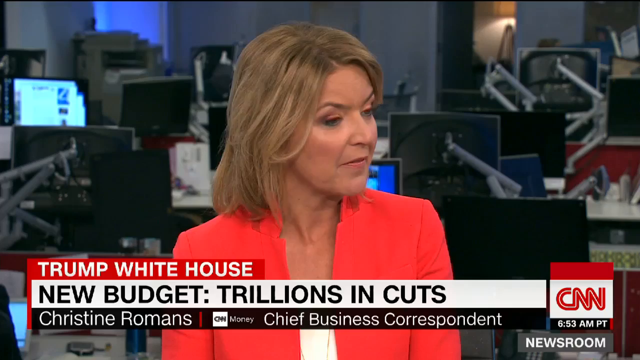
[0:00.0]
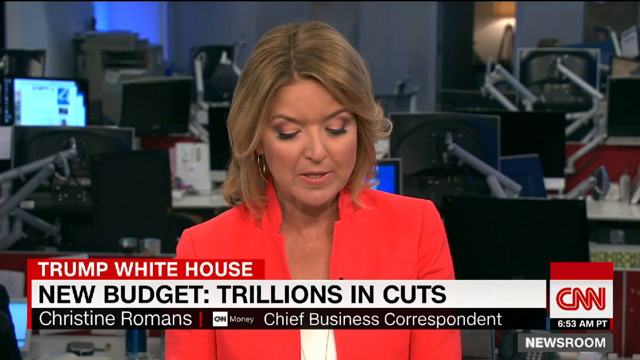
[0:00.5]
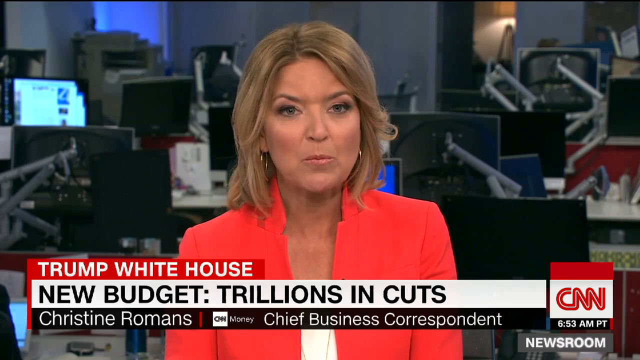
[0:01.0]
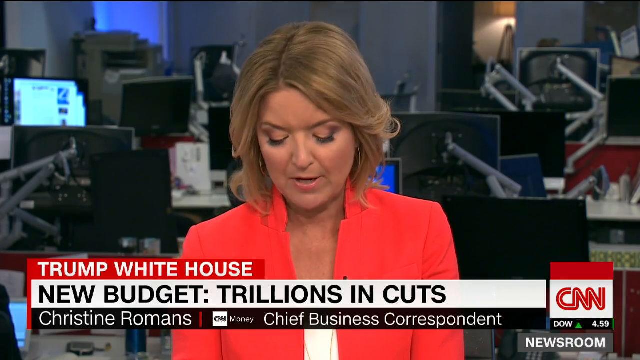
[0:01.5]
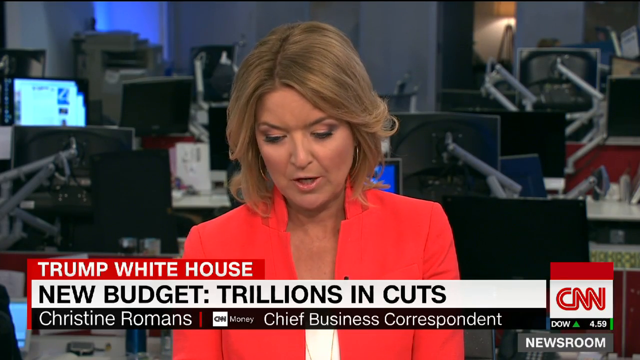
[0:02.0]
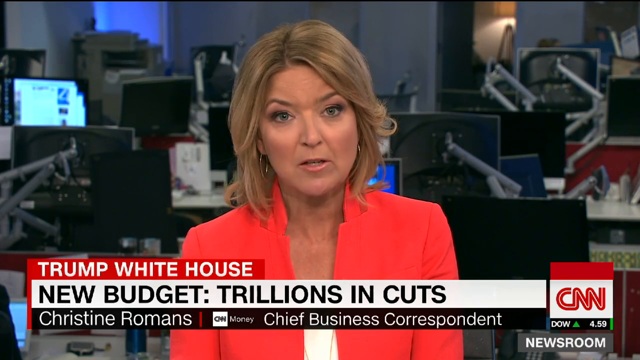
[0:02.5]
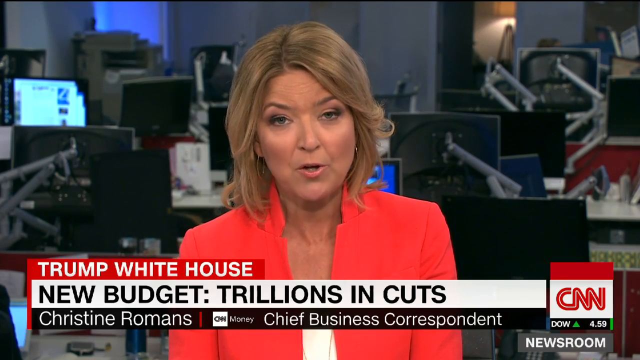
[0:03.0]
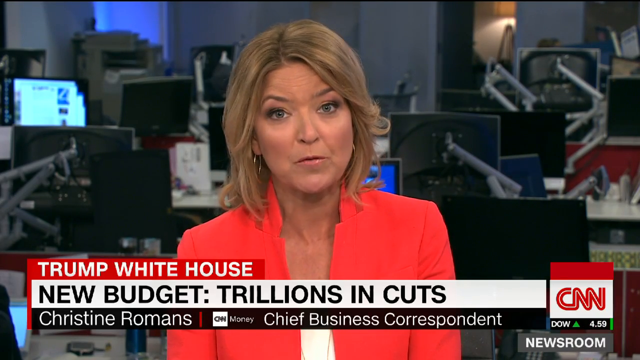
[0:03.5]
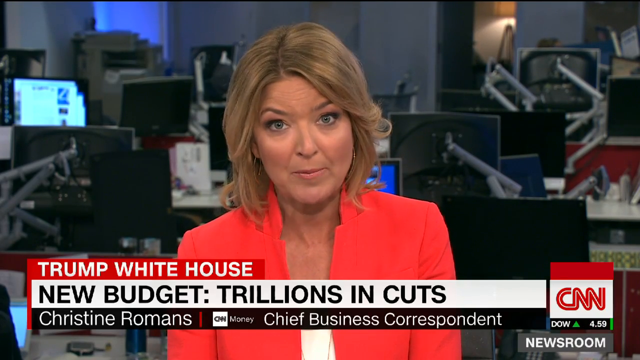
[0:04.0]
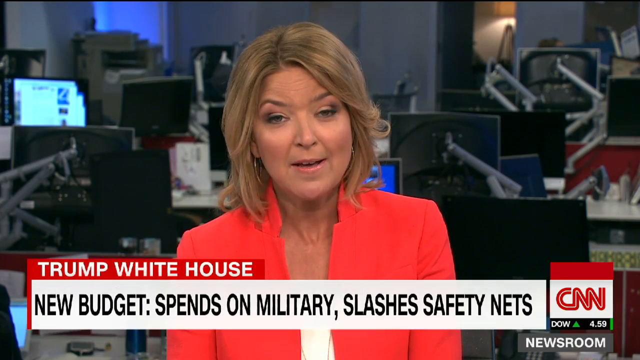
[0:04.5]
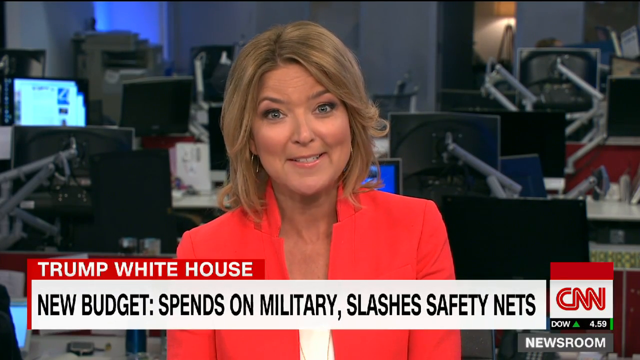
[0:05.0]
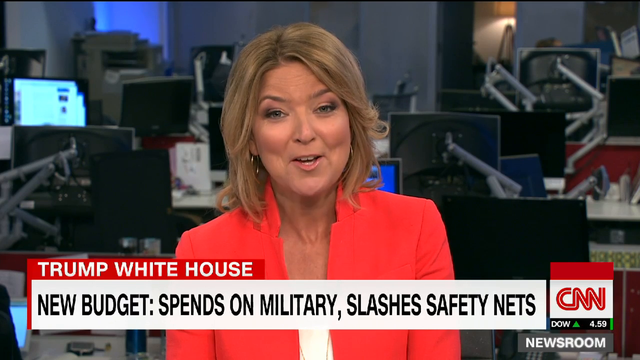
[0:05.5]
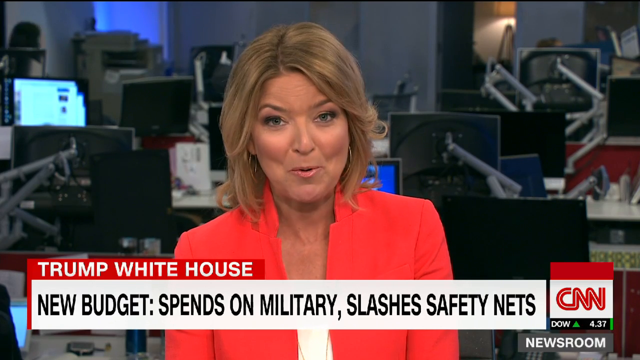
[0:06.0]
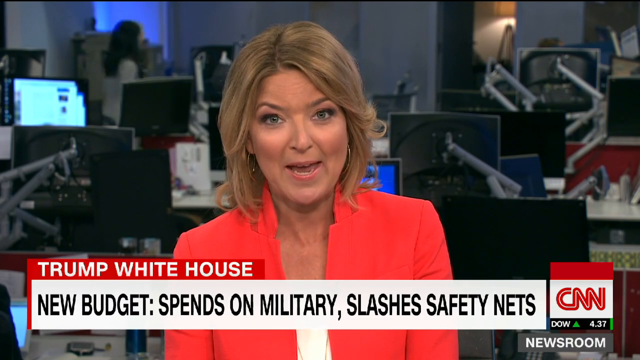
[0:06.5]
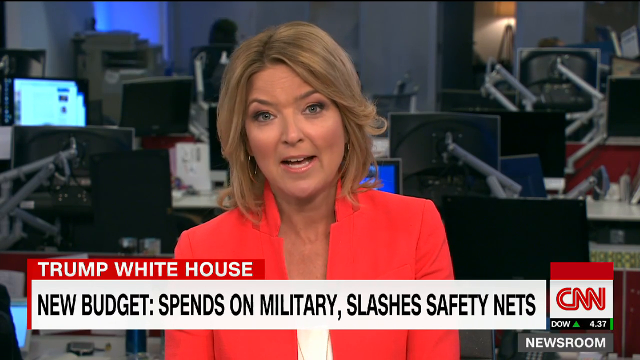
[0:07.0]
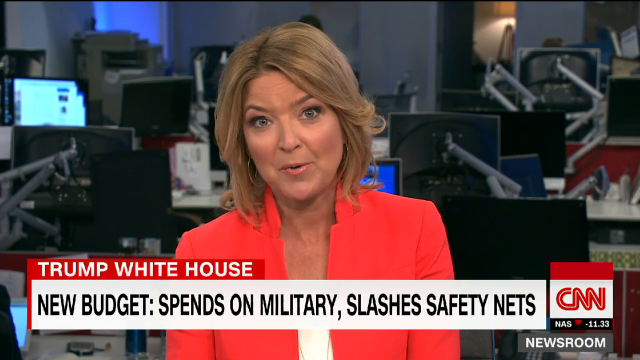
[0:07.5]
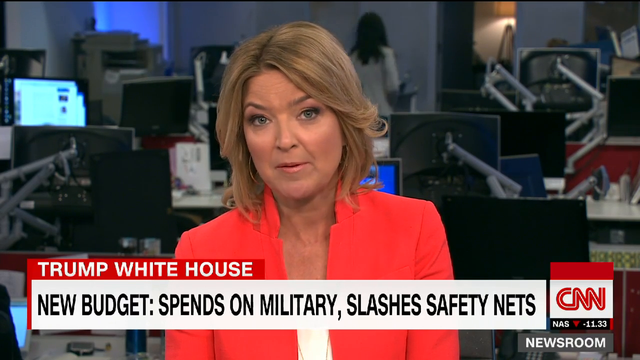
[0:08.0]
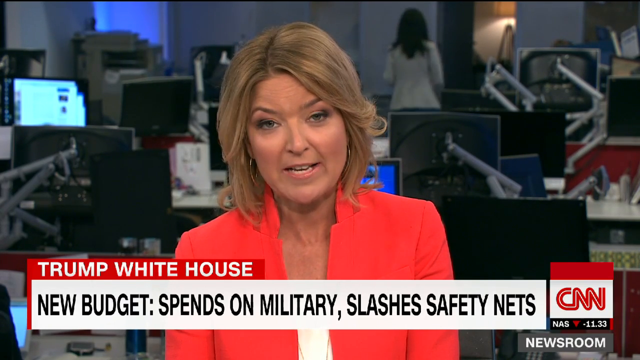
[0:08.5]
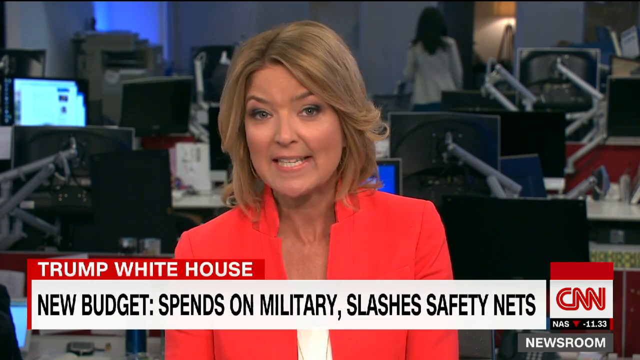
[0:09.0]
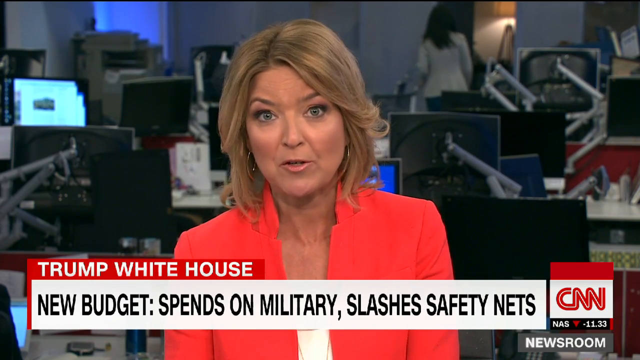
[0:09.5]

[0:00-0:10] A news report from CNN Newsroom covers the Trump White House, with a headline about new budget plans for the military. A woman who appears to be in her 40s, with blonde hair that is not very long, wears a red jacket and a white top. There is a small TV inside the newsroom, along with several other things that appear to be TVs; some of the TVs are off. Someone moves in the background, going outside.